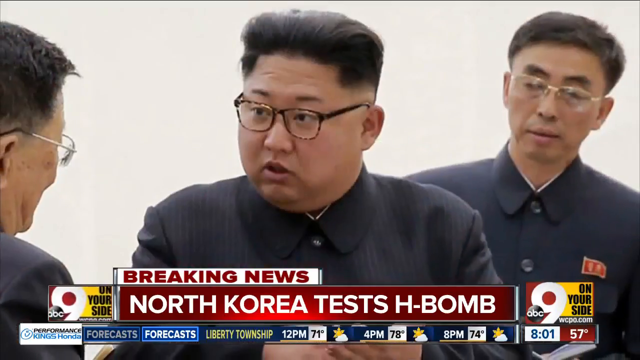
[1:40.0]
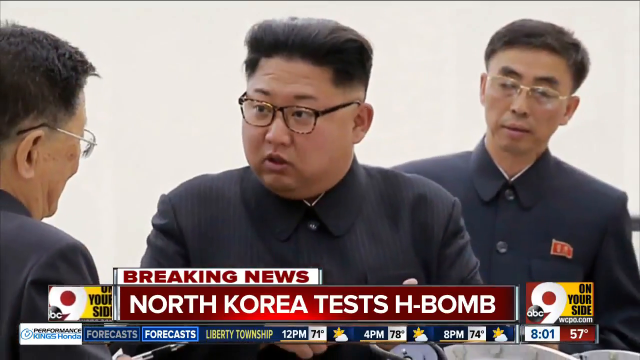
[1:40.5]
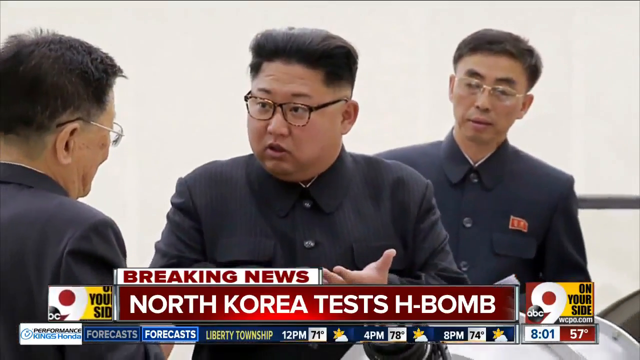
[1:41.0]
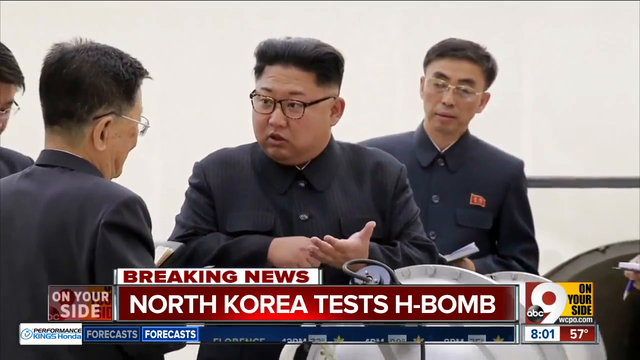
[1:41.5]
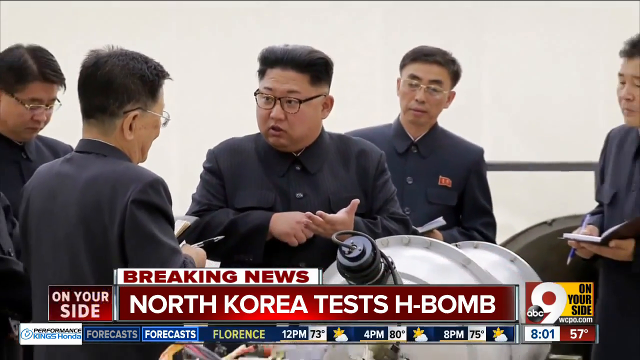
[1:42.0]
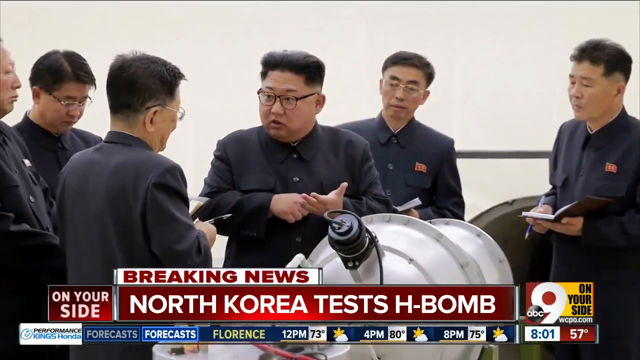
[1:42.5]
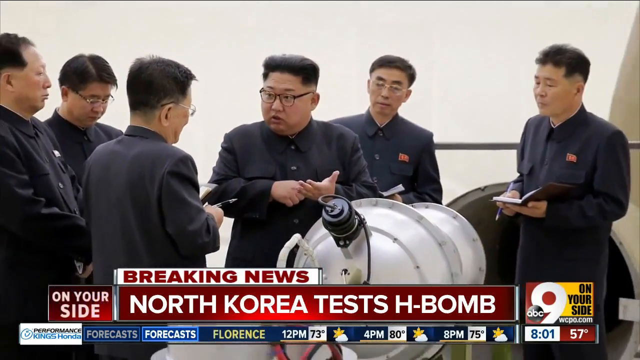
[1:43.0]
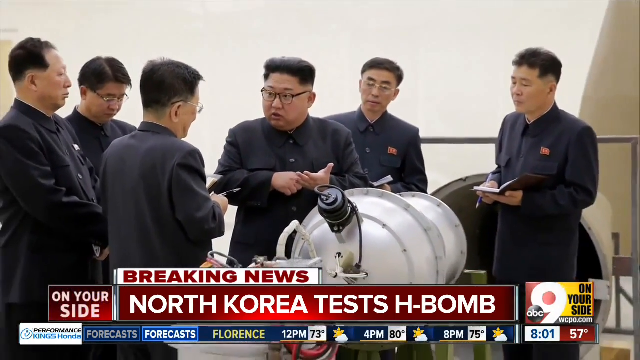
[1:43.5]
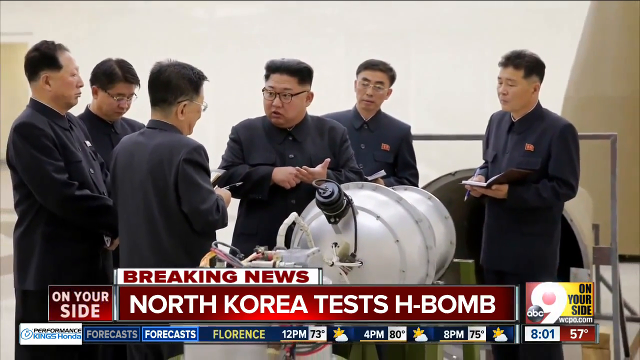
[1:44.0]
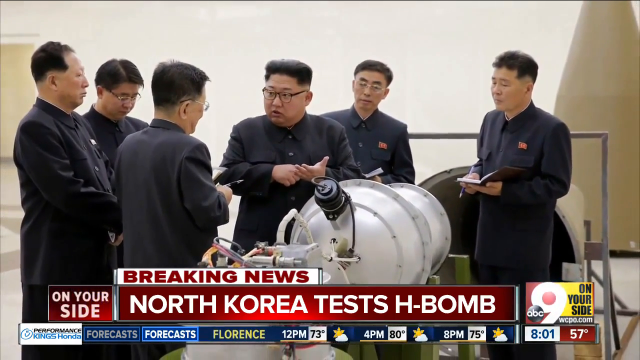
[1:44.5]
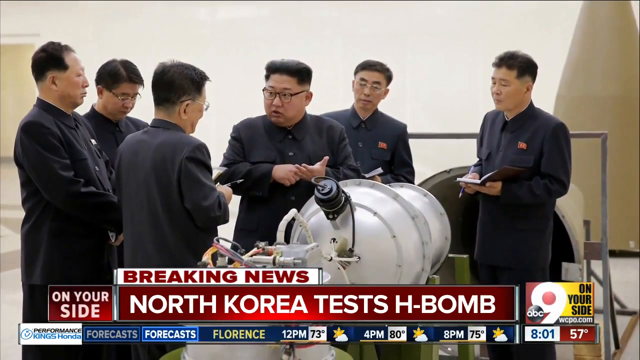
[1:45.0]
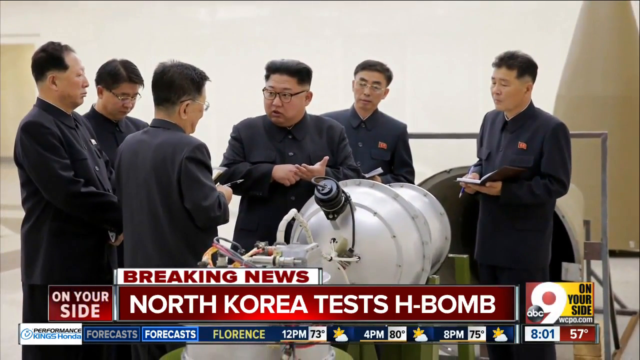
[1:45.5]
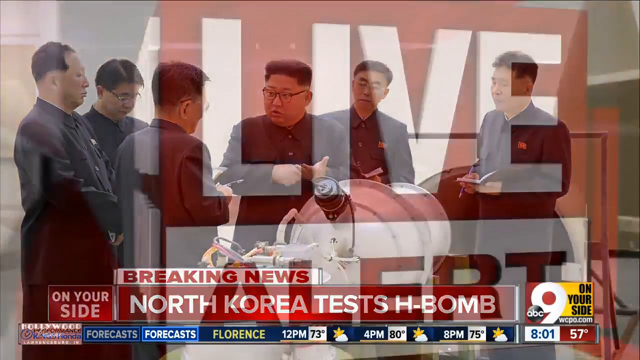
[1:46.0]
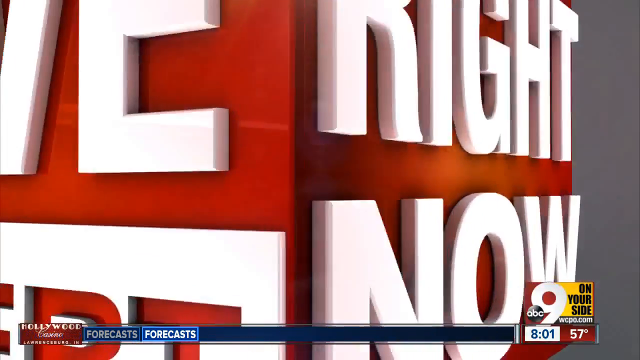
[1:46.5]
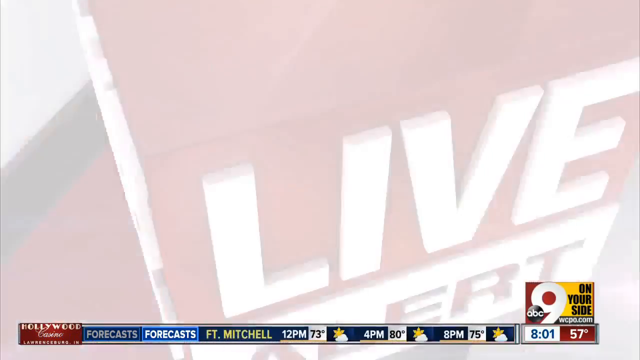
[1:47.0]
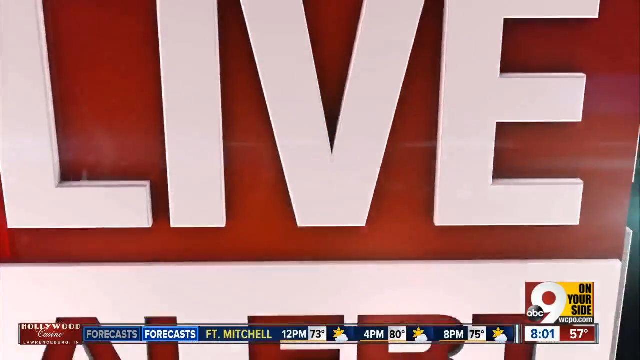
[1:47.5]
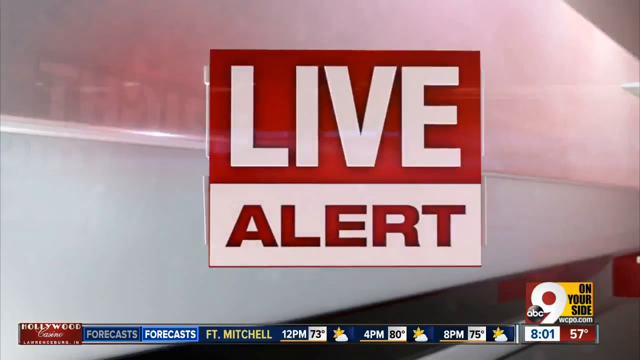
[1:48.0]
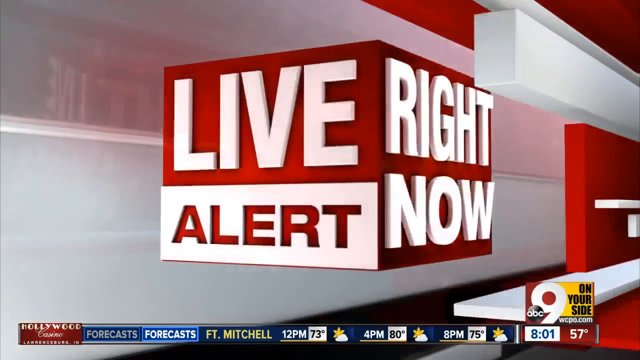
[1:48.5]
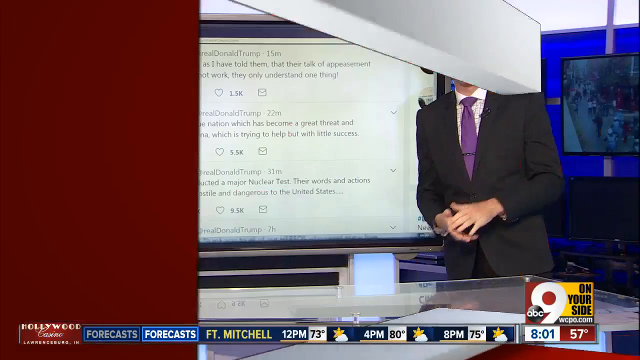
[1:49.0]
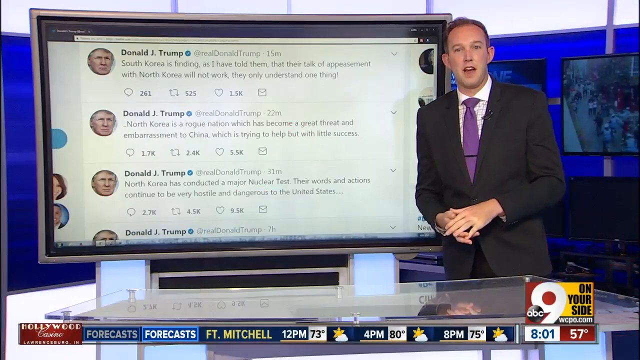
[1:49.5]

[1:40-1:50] Another photo shows the leader of North Korea holding his left palm in front of him, facing upward, and pointing to it with his right hand while speaking to a man directly to his left, who holds a pen in his right hand. The camera zooms out to reveal a white cylinder in the middle of the room. A man off to the right holds an open notebook in his left hand and a pen in his right, and another man on the right also holds a notebook open. An infographic then reads "live alert right now", and the man in the black suit and purple tie from the beginning of the video appears, apparently with a black tie clip on his tie, standing in front of the TV screen.